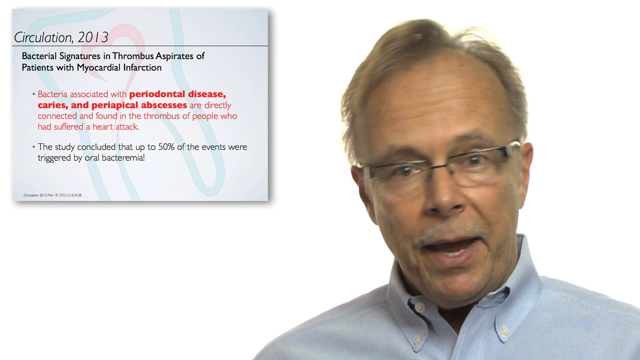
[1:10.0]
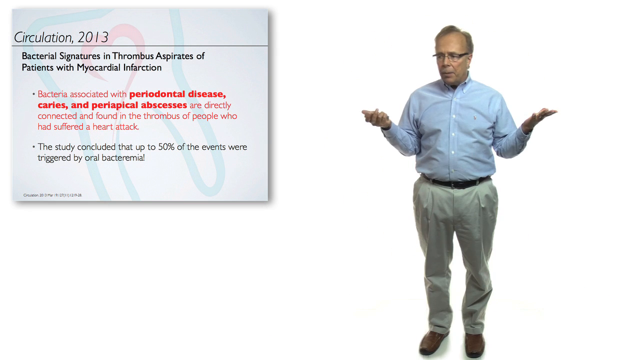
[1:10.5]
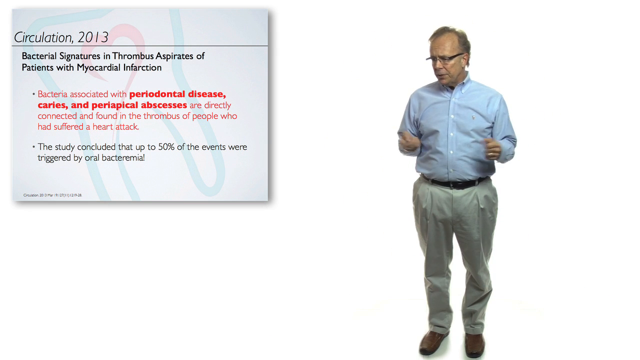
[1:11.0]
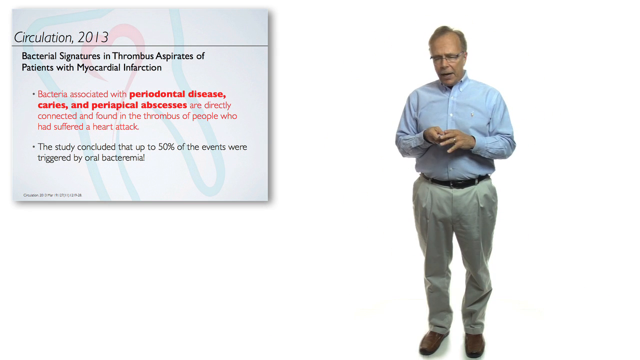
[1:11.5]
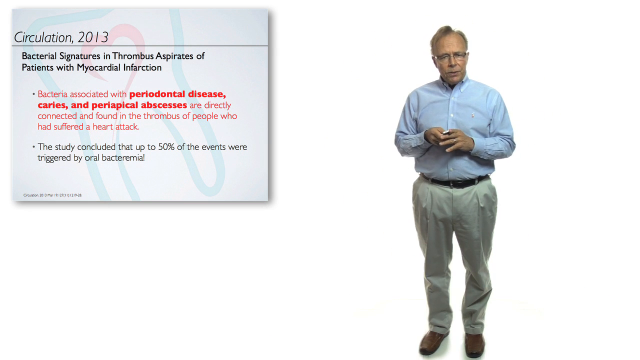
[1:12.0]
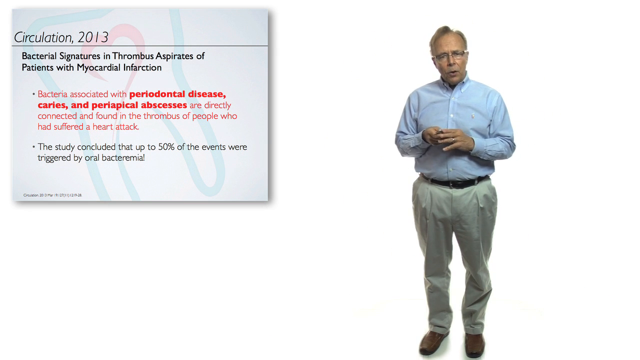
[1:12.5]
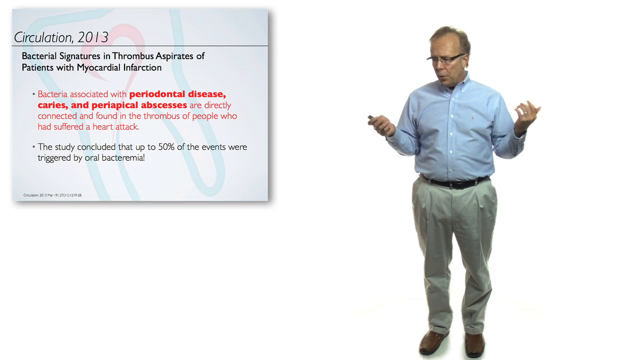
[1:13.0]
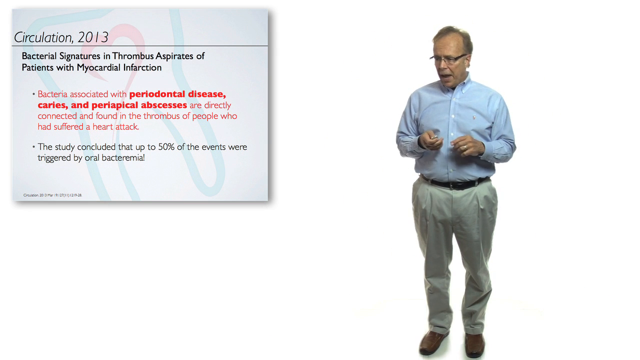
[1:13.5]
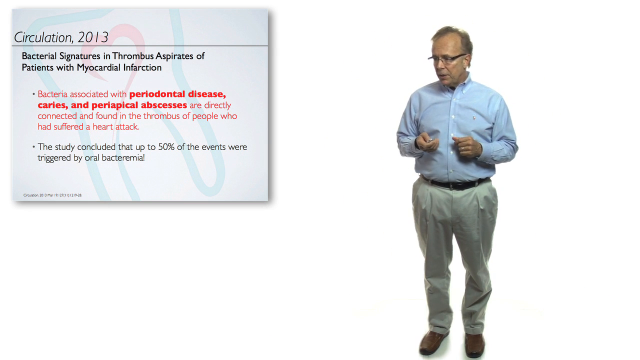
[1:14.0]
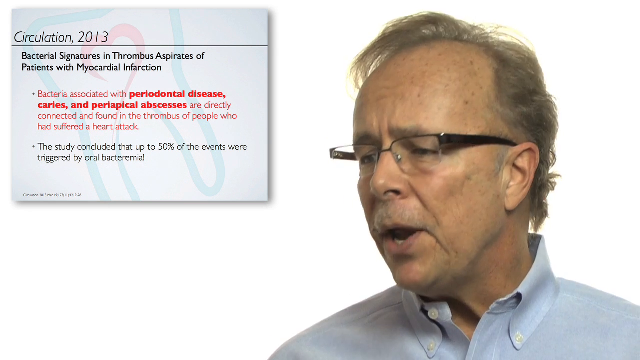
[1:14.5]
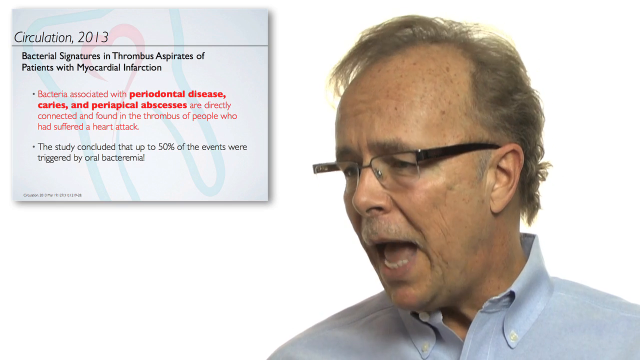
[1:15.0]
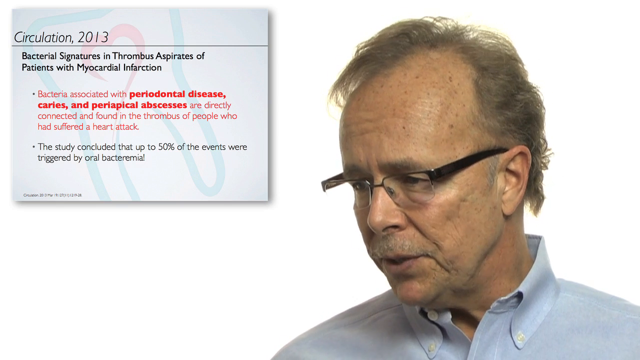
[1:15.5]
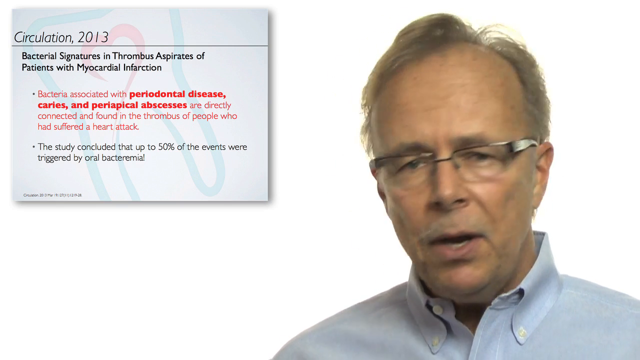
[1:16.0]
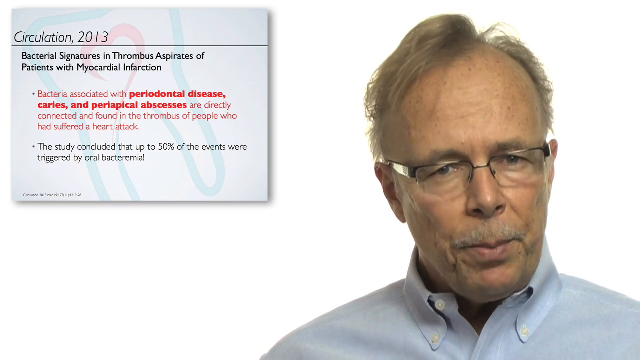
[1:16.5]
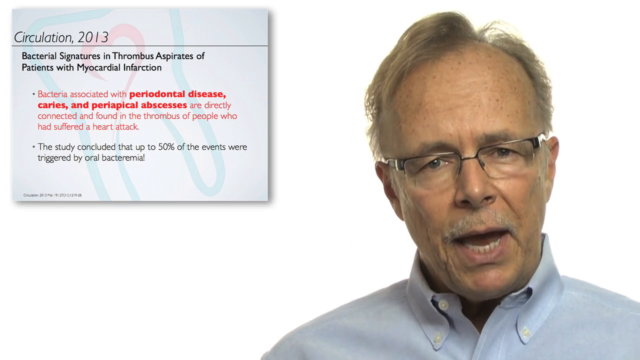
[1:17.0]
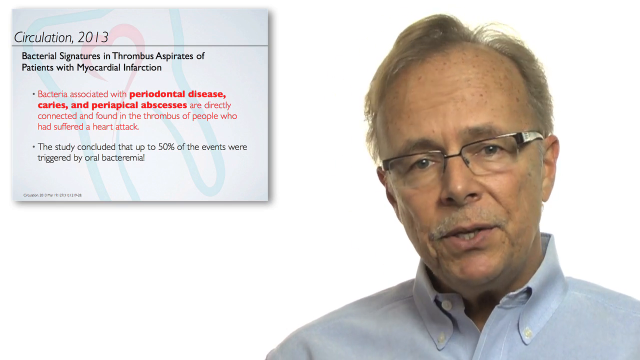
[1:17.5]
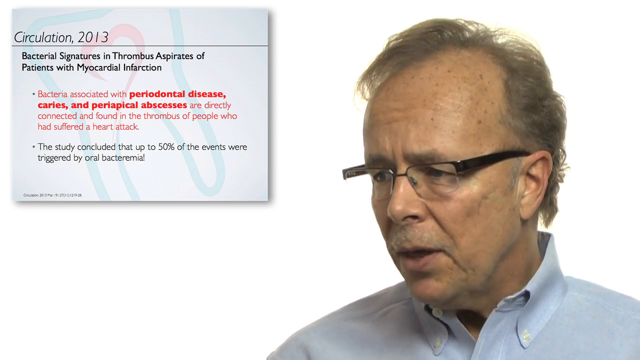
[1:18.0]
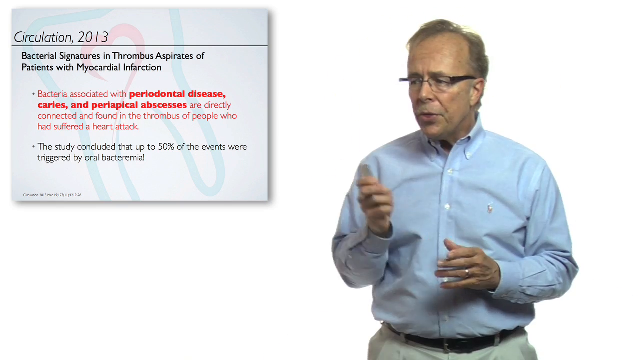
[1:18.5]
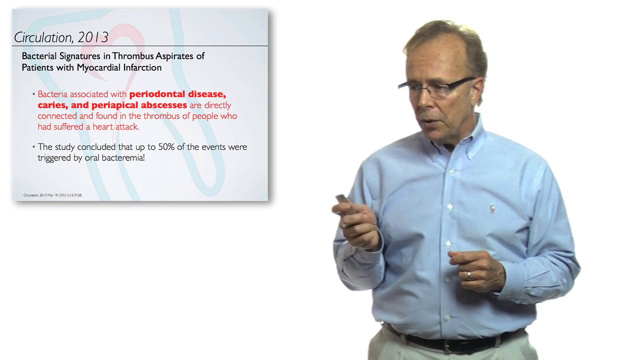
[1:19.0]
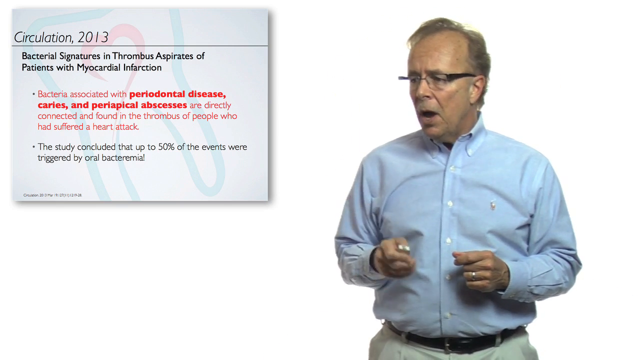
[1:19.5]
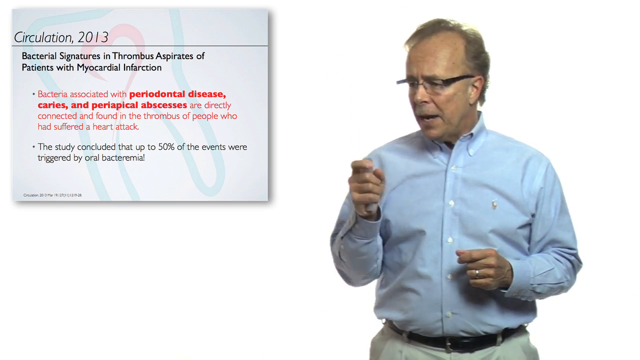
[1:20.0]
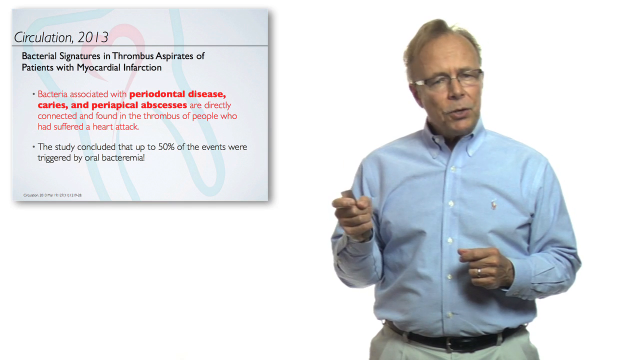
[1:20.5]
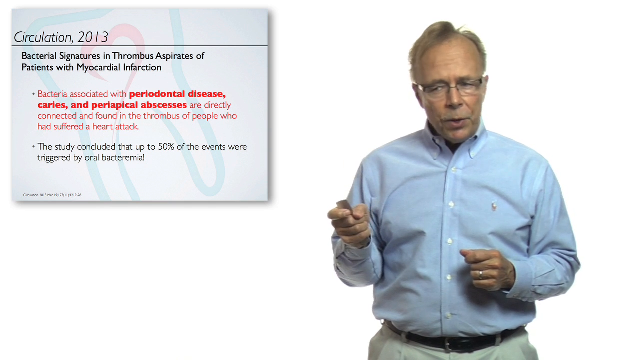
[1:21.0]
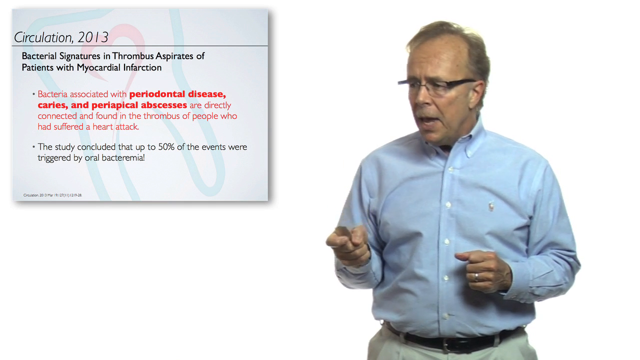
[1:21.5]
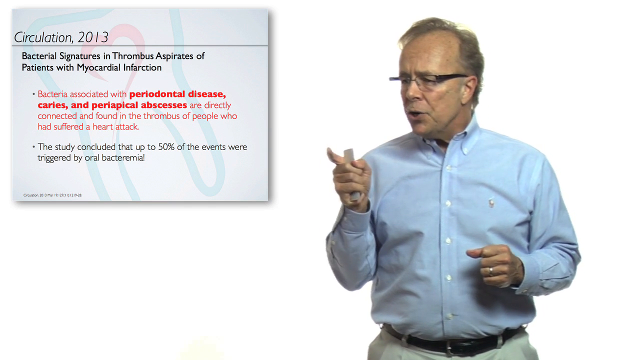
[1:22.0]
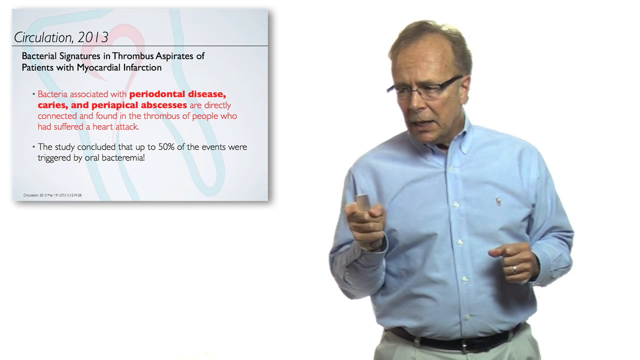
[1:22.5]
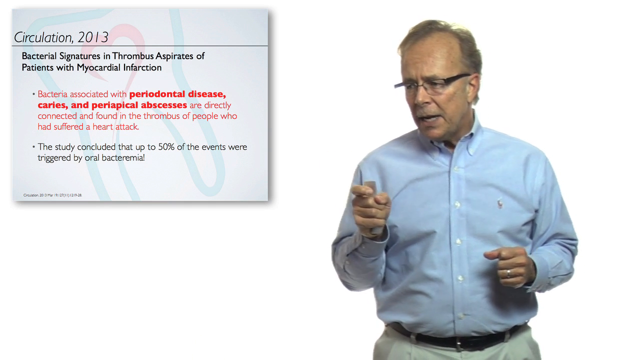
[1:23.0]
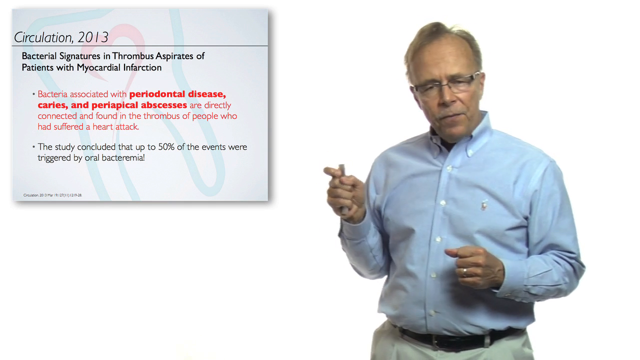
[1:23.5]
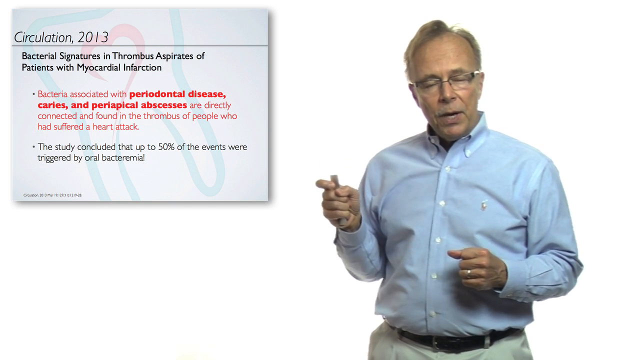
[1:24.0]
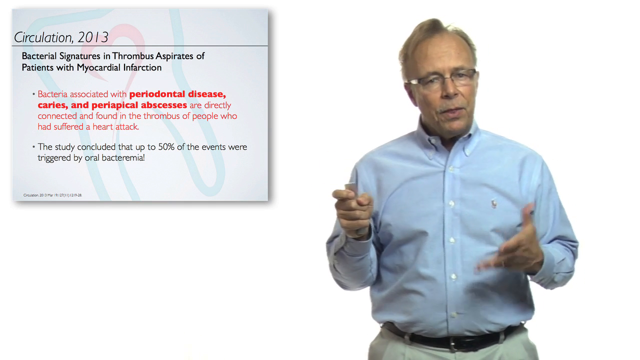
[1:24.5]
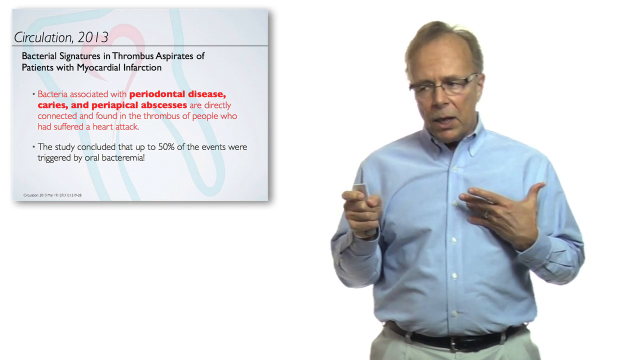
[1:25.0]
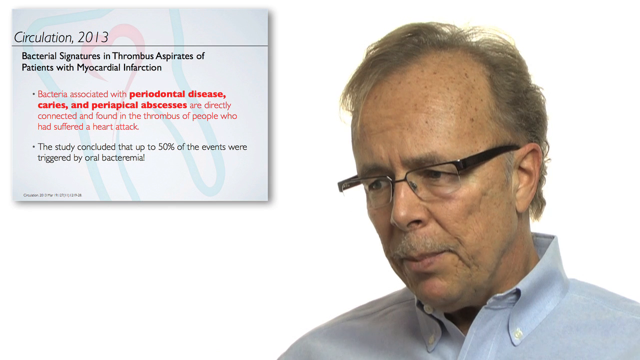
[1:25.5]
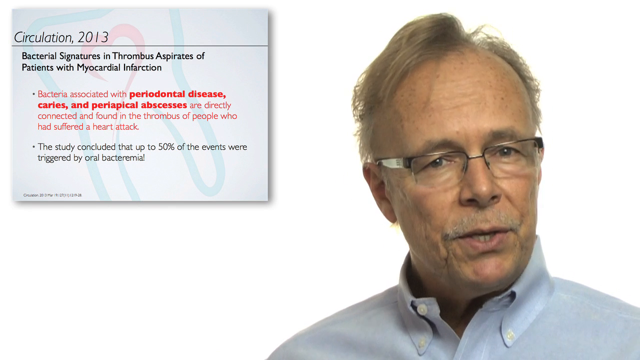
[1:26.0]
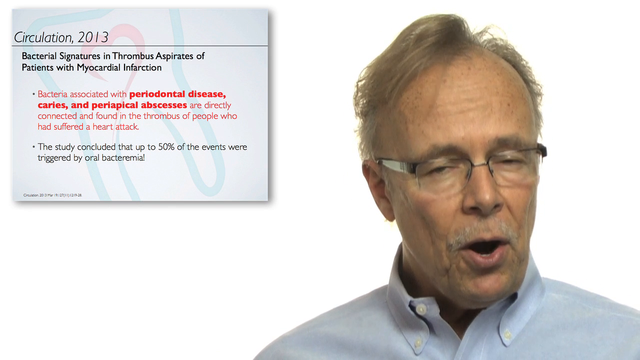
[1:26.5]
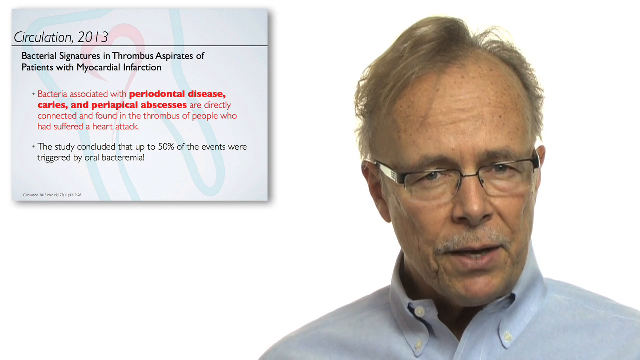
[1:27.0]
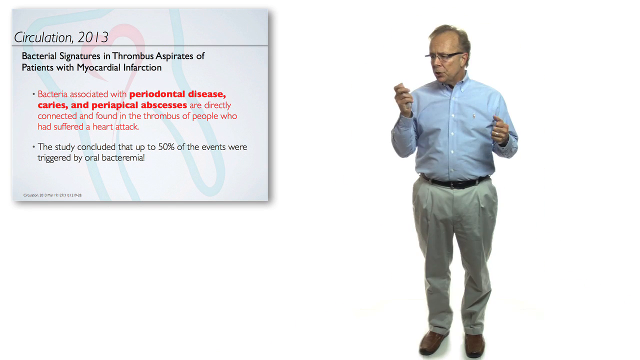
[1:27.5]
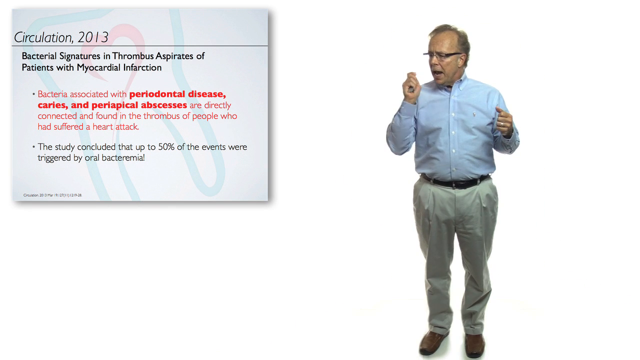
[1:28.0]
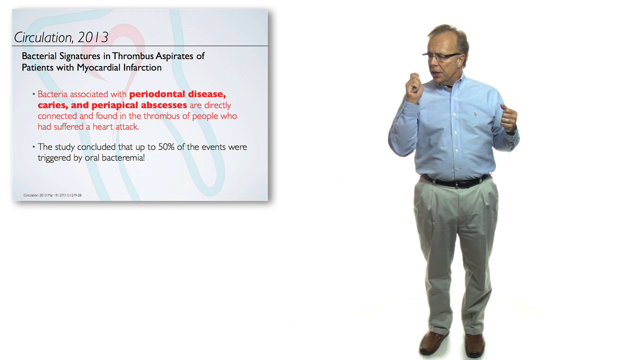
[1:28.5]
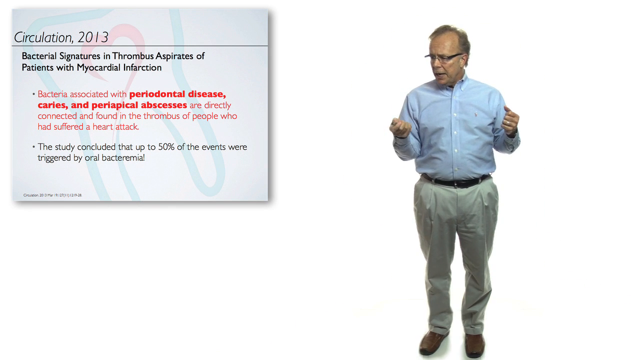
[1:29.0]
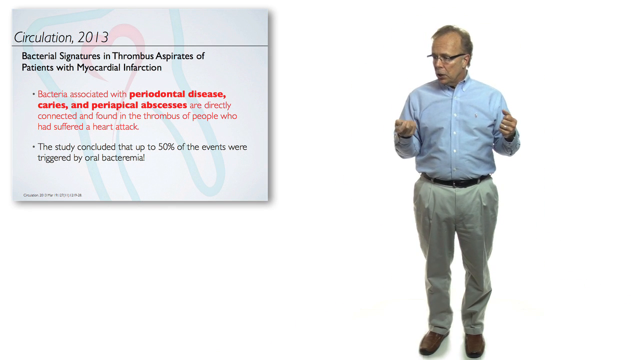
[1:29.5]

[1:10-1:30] The man holds both hands up in the air, possibly as if saying he does not know. He holds his hands together a few times but mainly points his pointer, and he also points the pointer finger of his right hand. His glasses have a kind of thick black frame and handles; the frames are rectangular, with a thin, kind of bronze frame only at the top of the lenses. His collared shirt is buttoned up except for the very top button around his neck, which is open, and the buttons are white. He looks maybe somewhere between 65 and 70 years old, with a few small wrinkles on his forehead and a few moles on his face, mainly on his forehead.